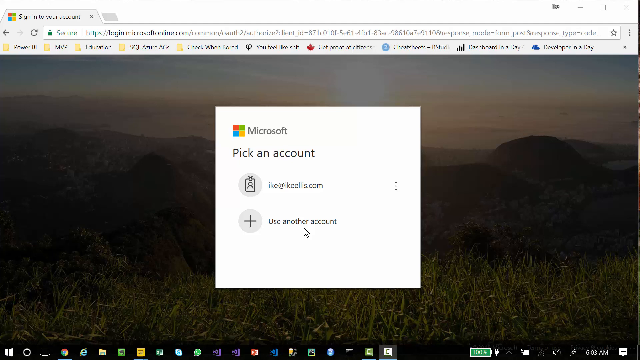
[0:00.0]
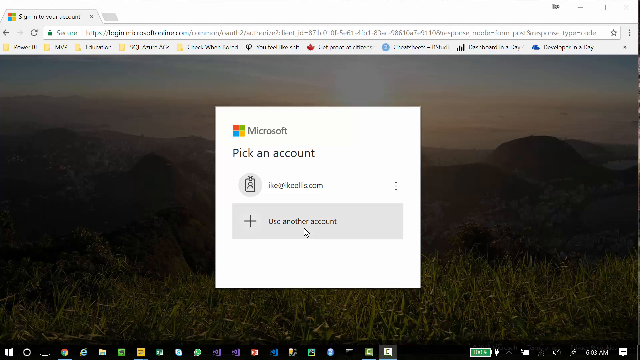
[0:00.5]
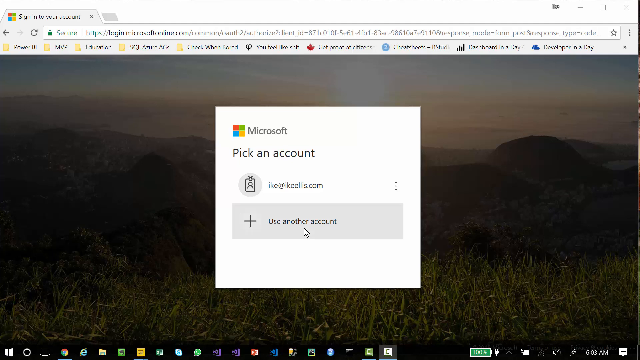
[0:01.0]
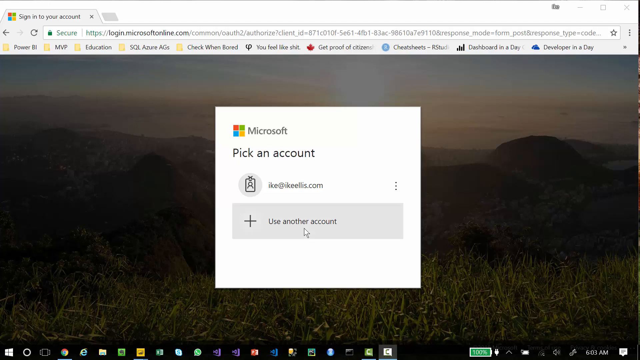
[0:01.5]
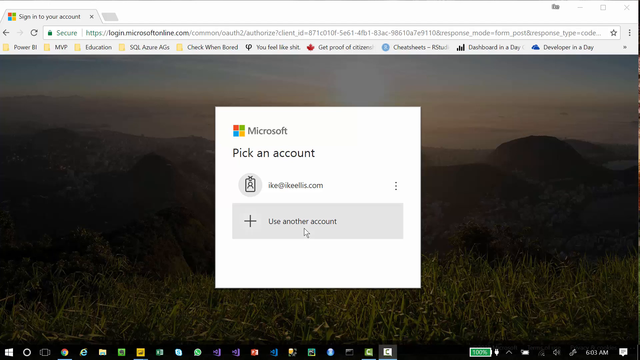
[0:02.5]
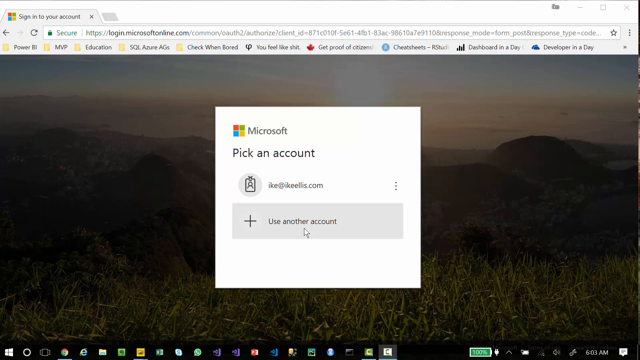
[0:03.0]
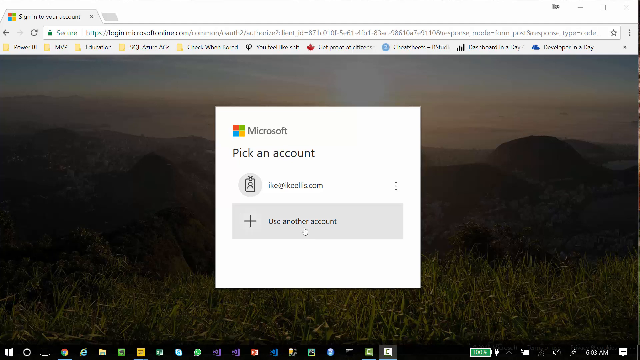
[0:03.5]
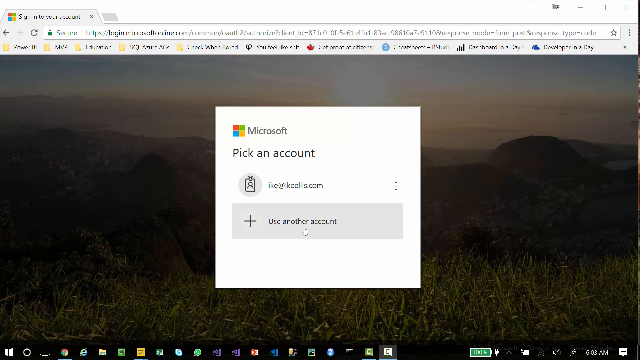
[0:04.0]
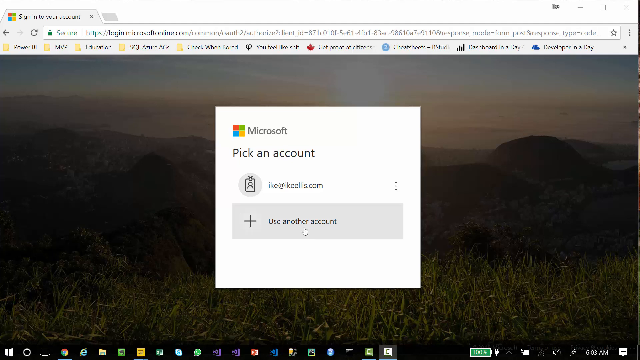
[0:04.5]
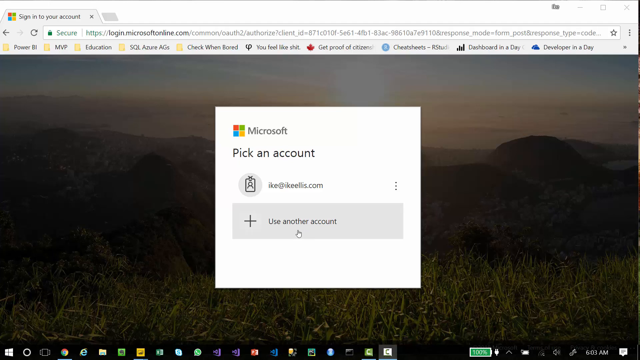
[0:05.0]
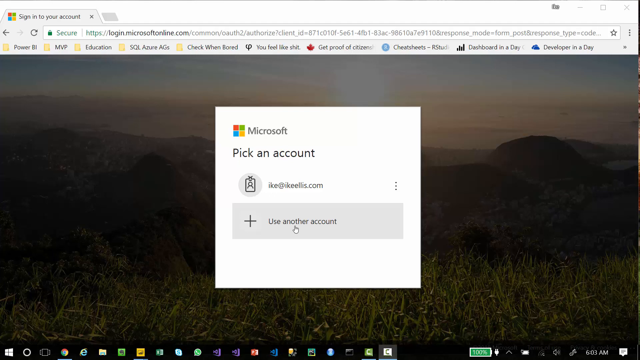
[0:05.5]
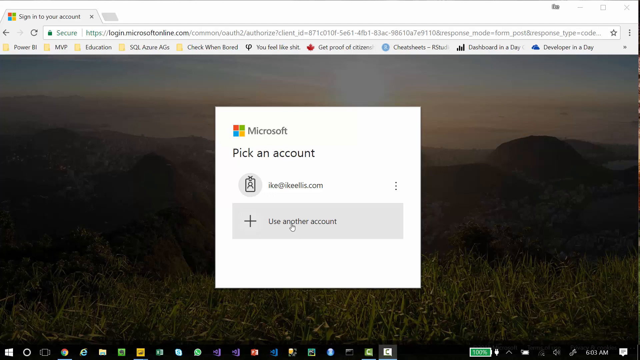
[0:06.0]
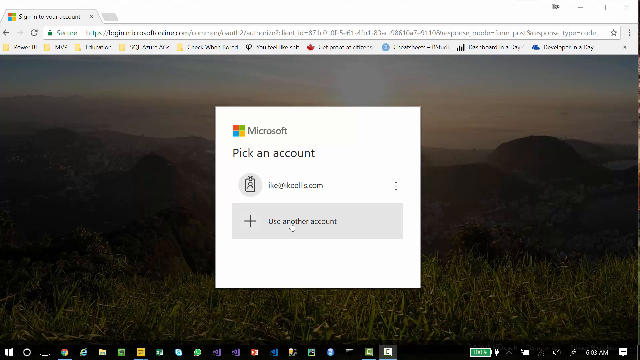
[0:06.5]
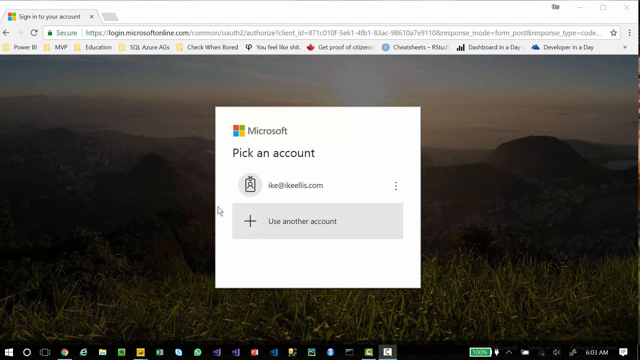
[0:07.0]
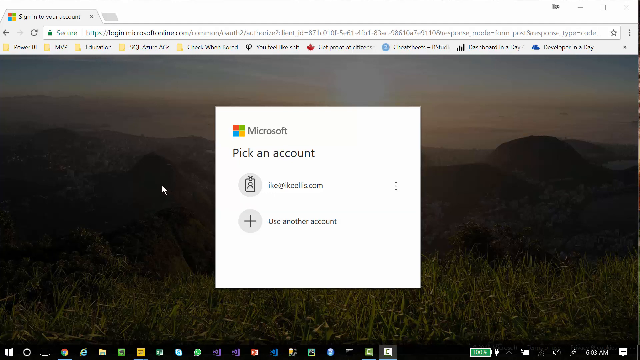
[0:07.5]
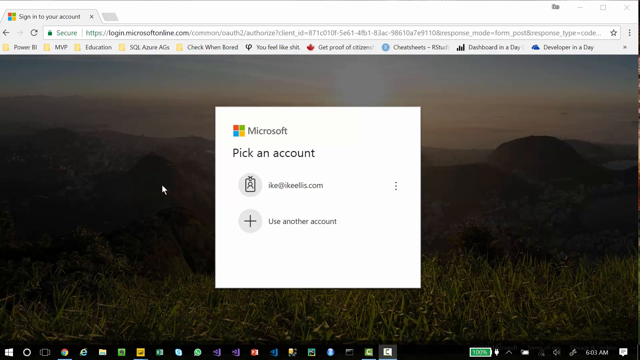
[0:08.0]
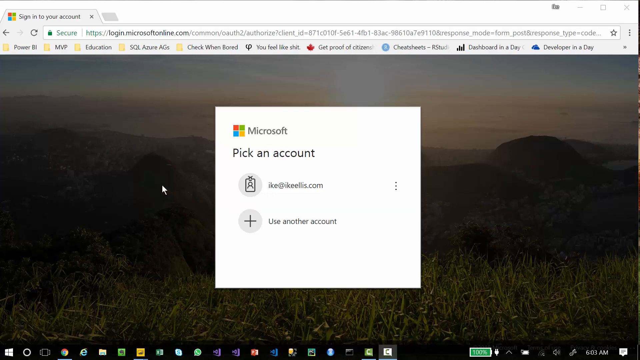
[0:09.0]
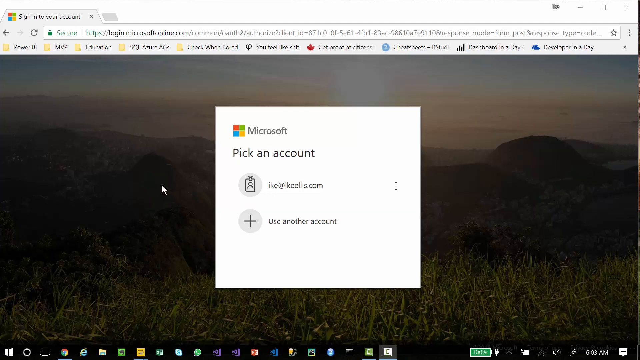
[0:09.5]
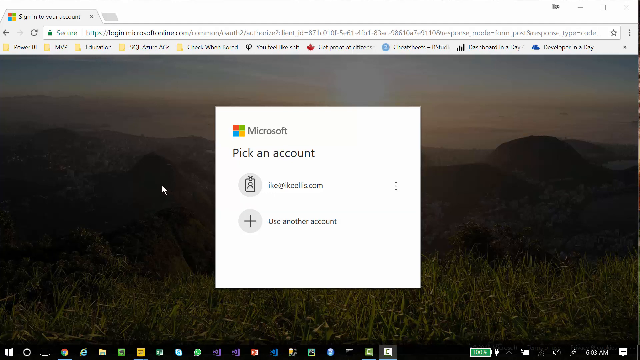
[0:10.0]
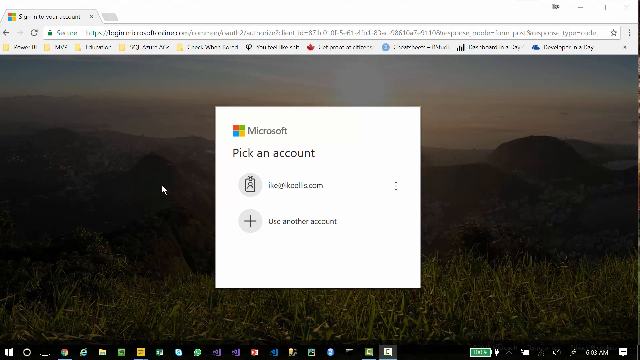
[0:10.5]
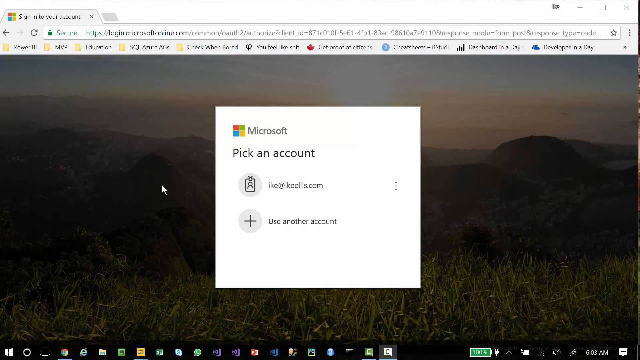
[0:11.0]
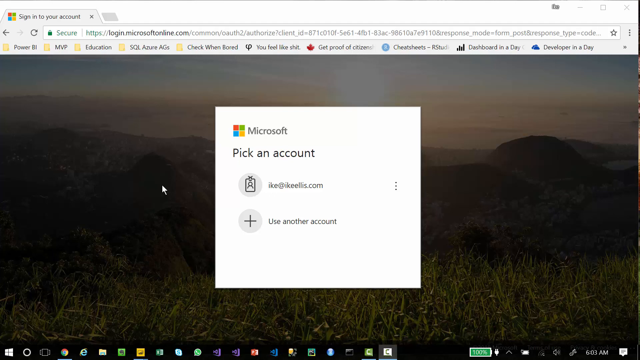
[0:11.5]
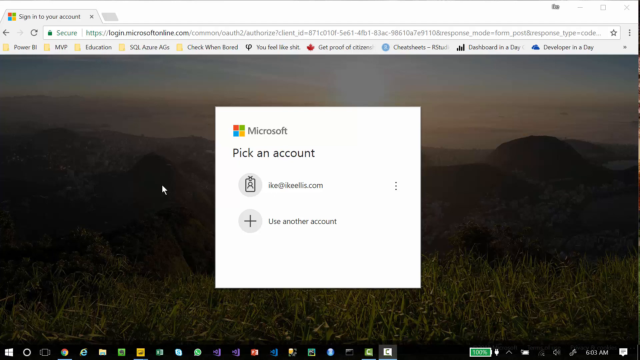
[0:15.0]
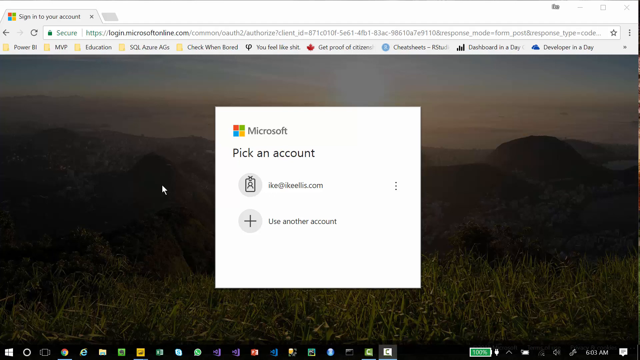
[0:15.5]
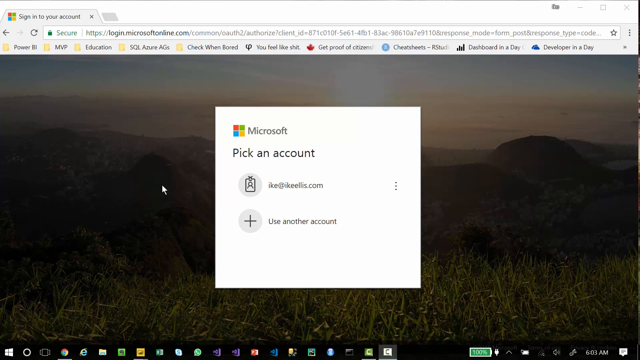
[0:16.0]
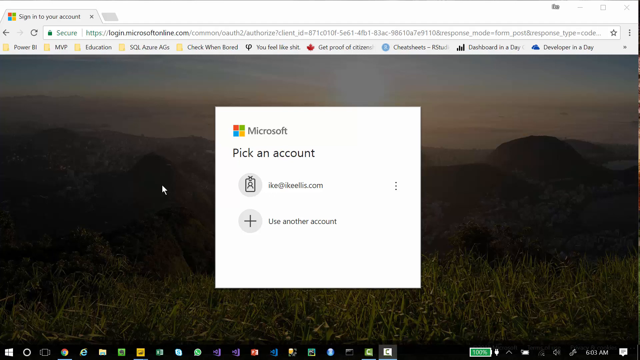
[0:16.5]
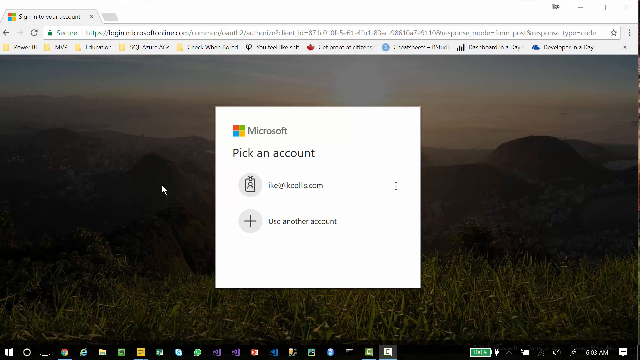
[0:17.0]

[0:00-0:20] A Microsoft login screen presents two options: "use another account" and one that starts with the letters I-K-E. The person moves the cursor above "use another account." At the very top of the screen is "login.Microsoft.com." The interface and its text look modern.